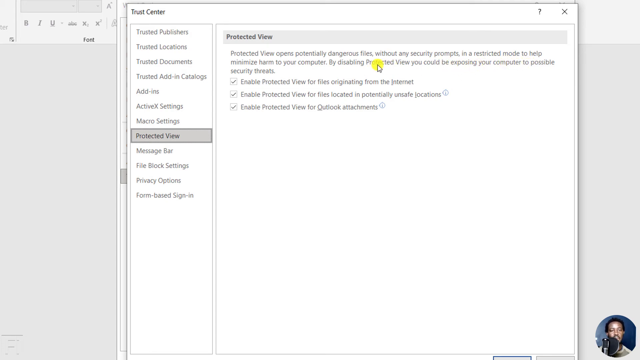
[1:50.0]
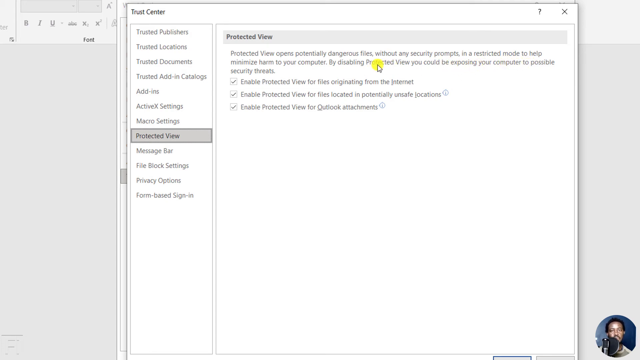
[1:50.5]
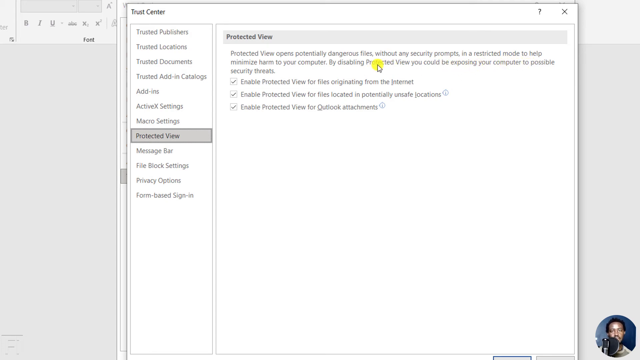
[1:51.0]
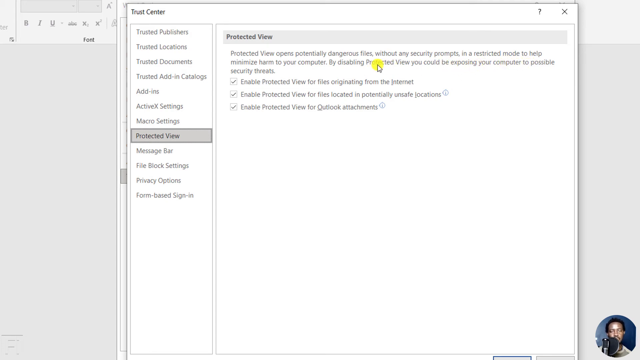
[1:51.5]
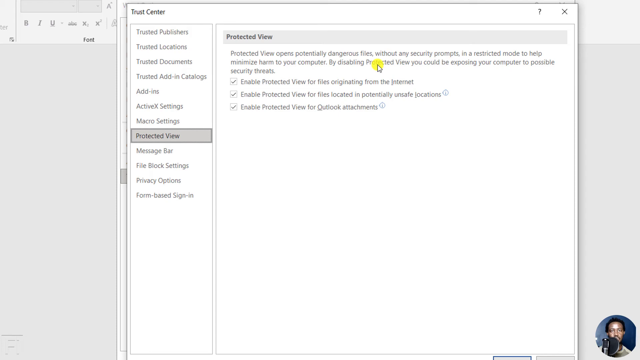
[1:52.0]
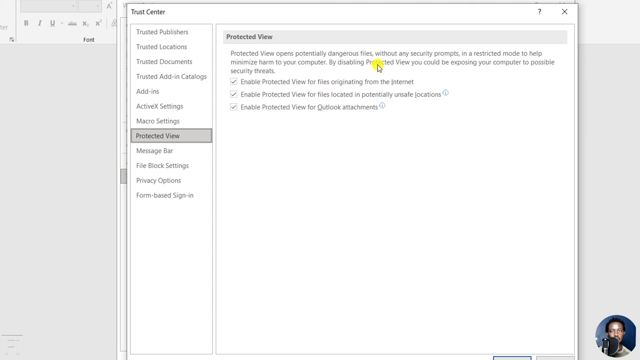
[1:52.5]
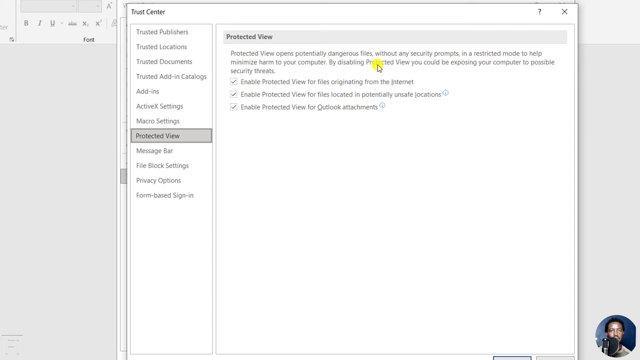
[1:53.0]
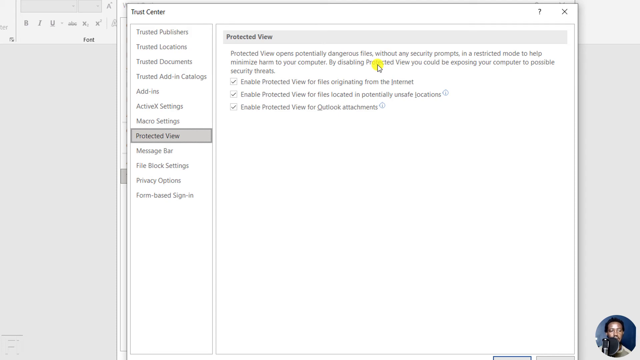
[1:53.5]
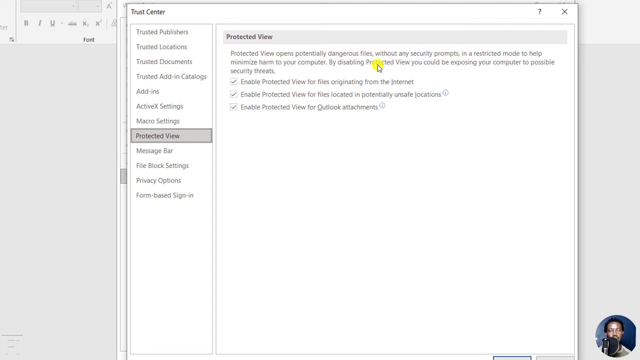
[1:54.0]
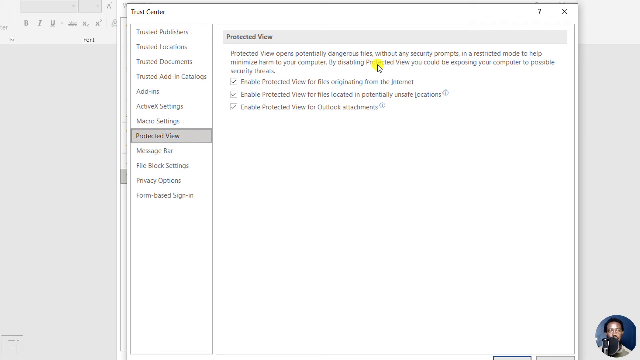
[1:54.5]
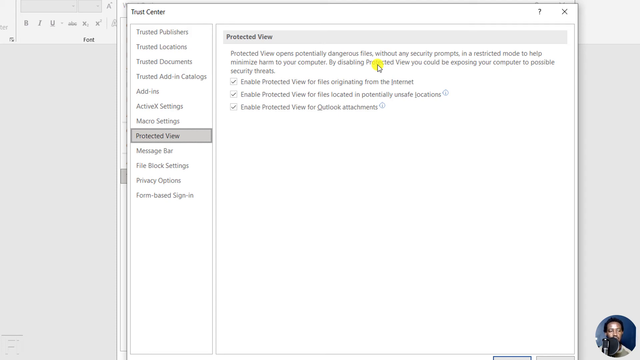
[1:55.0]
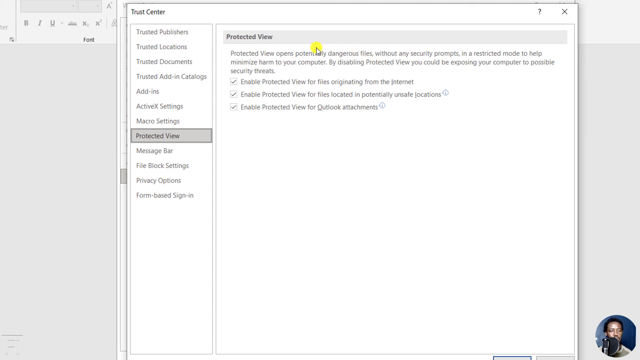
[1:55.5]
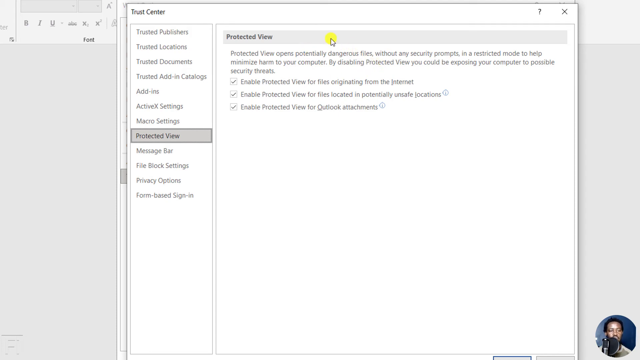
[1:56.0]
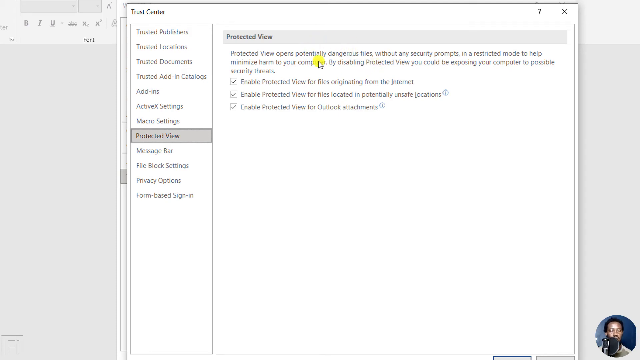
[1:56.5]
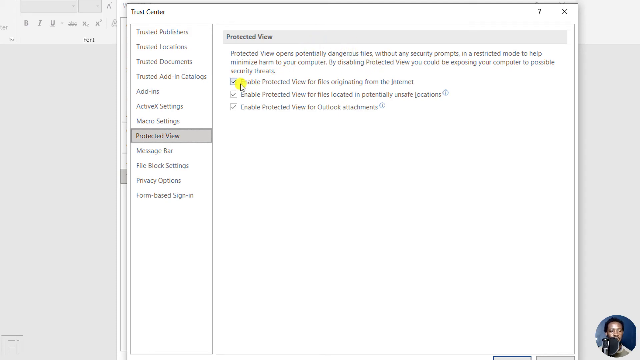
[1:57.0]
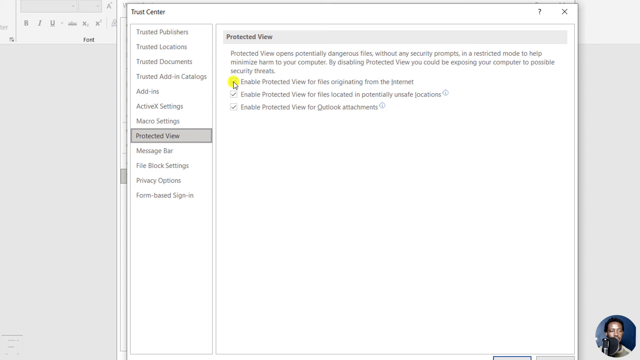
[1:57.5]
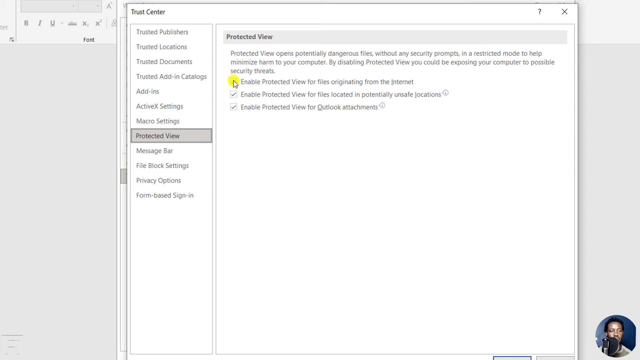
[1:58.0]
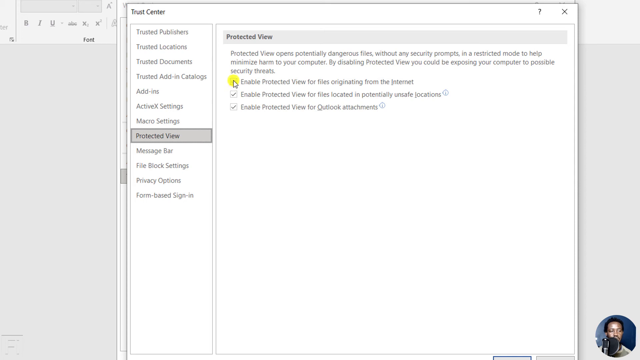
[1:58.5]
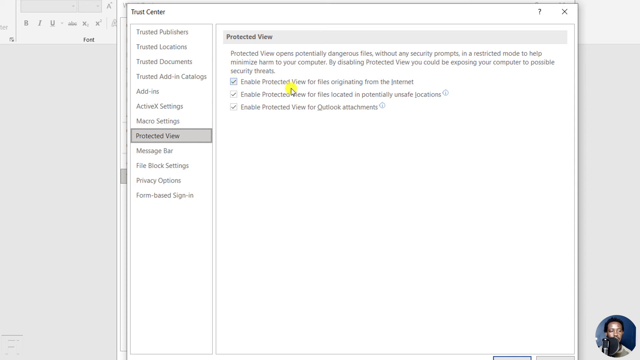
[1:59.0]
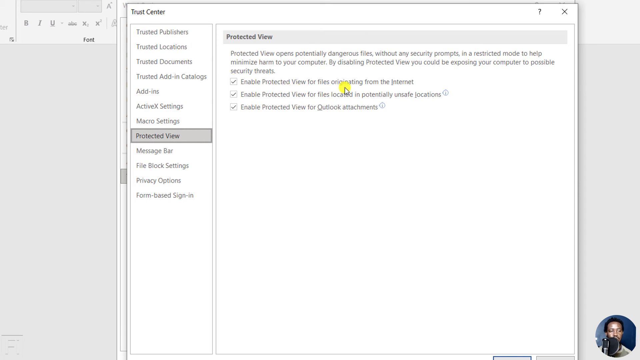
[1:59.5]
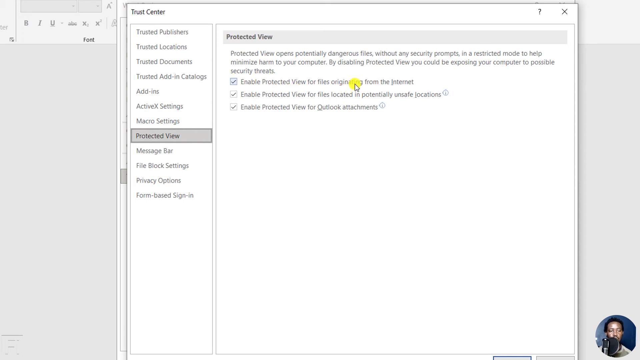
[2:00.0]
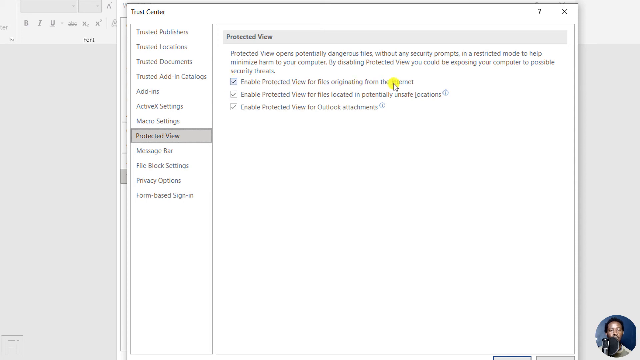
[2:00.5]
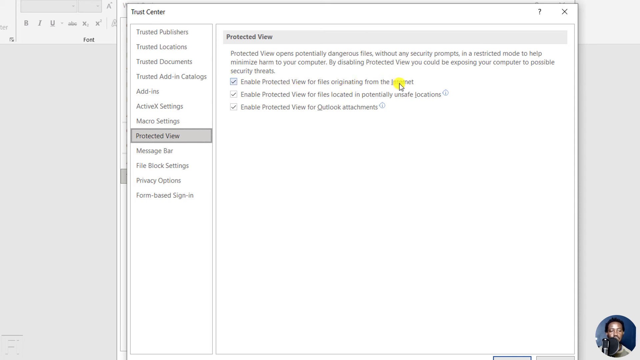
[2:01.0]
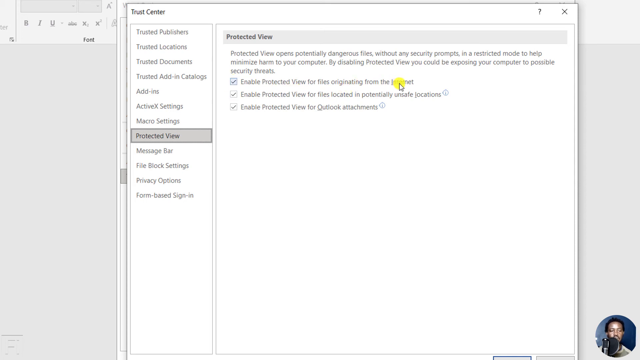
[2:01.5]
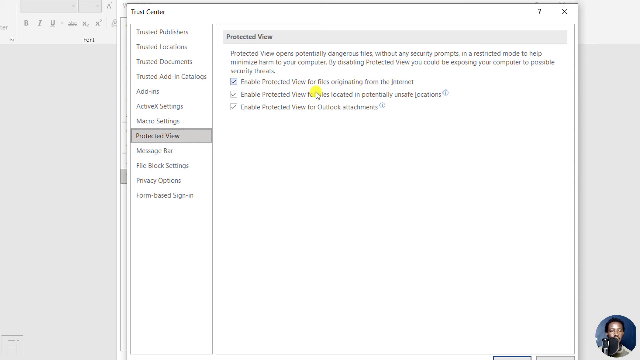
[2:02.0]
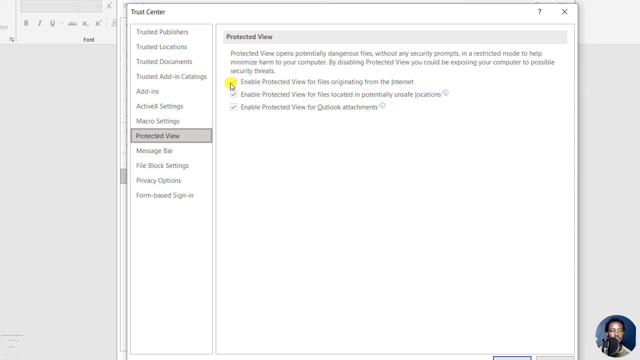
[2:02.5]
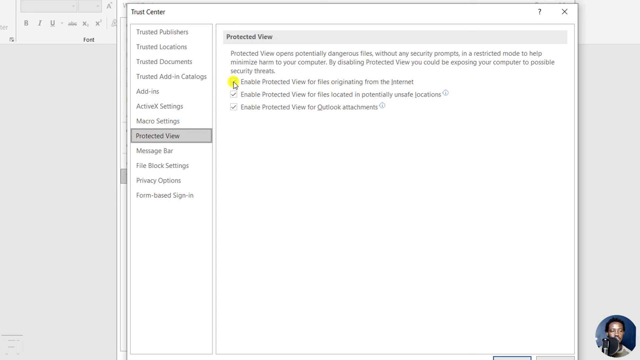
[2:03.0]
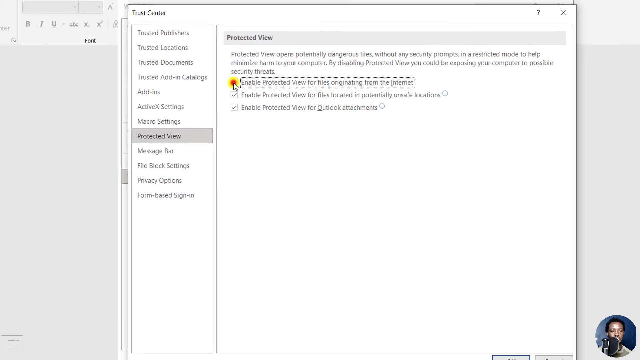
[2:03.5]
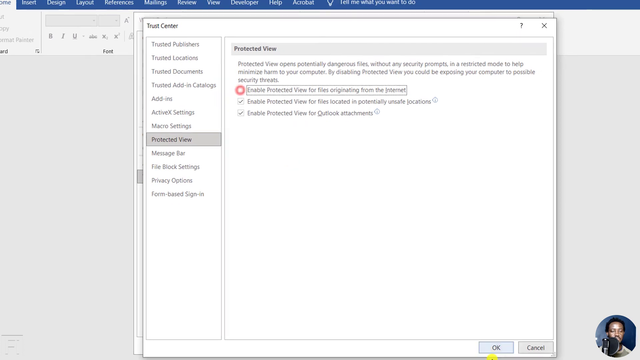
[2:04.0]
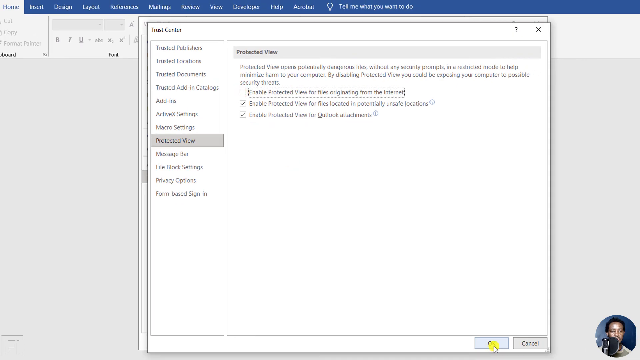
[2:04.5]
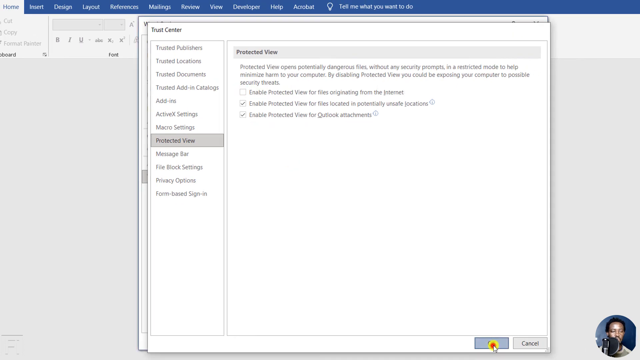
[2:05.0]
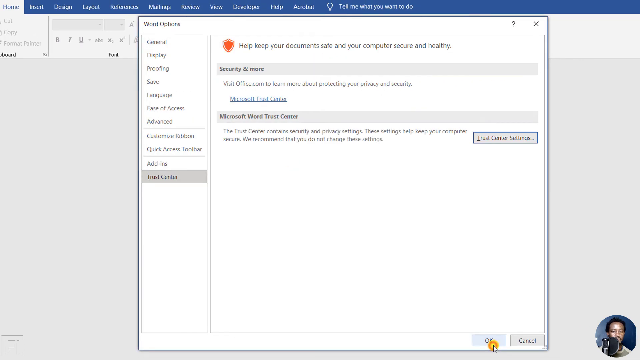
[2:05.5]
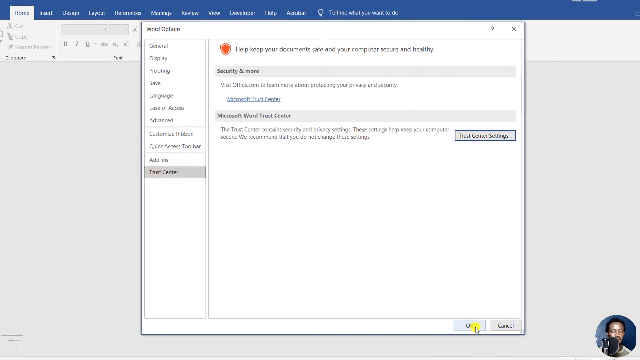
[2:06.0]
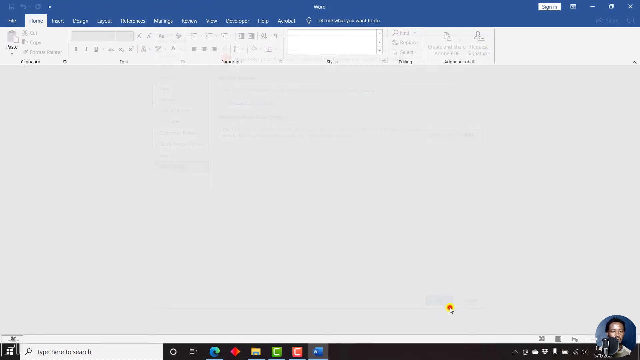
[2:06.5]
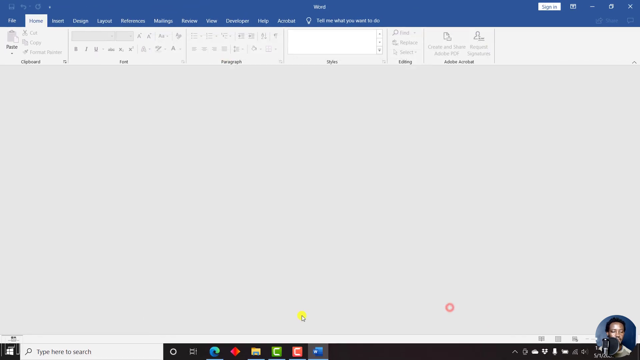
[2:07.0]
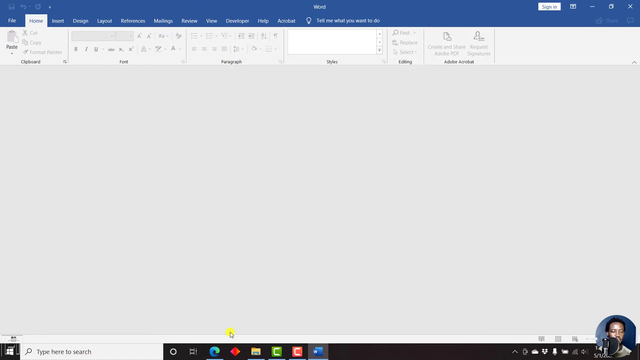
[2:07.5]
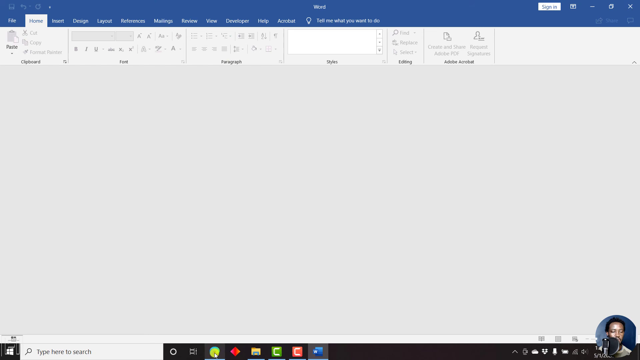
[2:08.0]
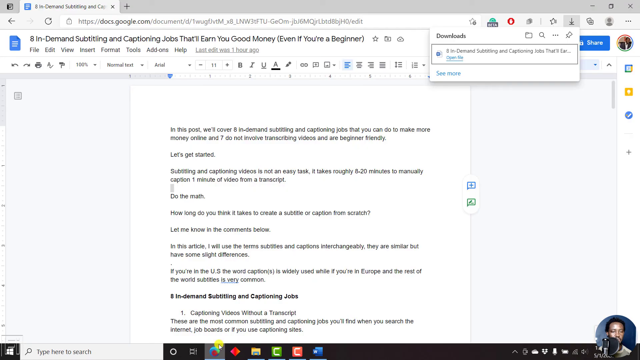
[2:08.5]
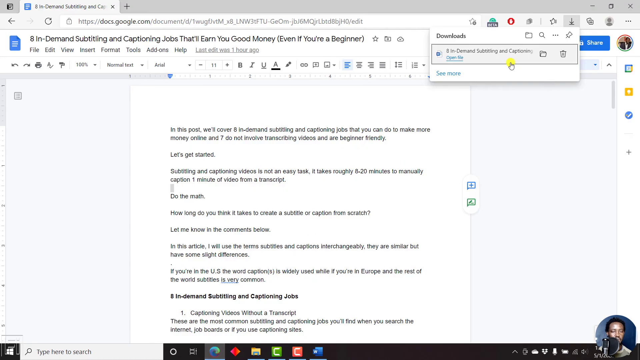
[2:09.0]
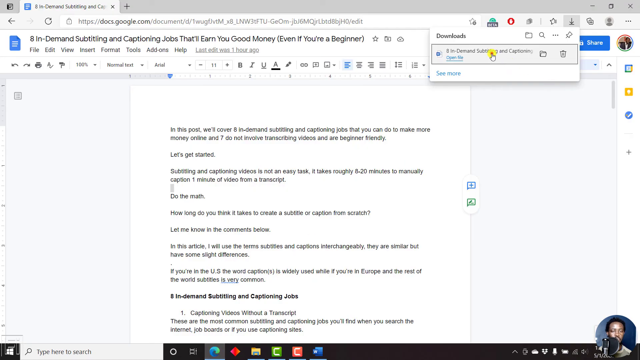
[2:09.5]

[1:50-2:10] The Trust Center window is open, with a column of options on the left: "Trusted Publishers", "Trusted Locations", "Trusted Documents", "Trusted Add-In Catalogs", "Add-Ins", "ActiveX Settings", "Macro Settings", "Protected View", "Message Bar", "File Block Settings", "Privacy Options", "Form-Based Sign-In". Protected View is selected, showing the page explaining Protected View in Microsoft Word. The cursor moves over the line "Enable Protected View for Files Originating from the Internet", which has a checkmark, then clicks the checkmark, and it disappears, leaving an empty white box. The screen recording zooms out as the person closes two of the windows, returning to an empty Microsoft Word program. He then returns to the Google Docs website and reopens the download from the Google document.